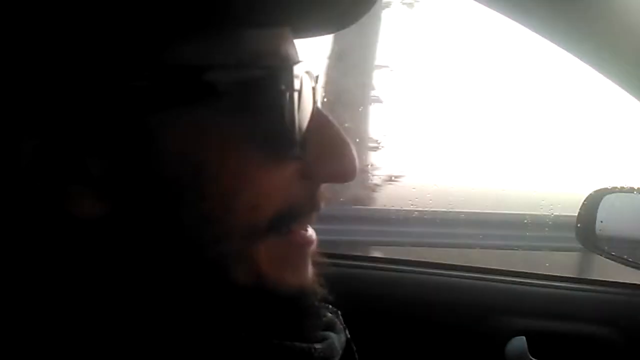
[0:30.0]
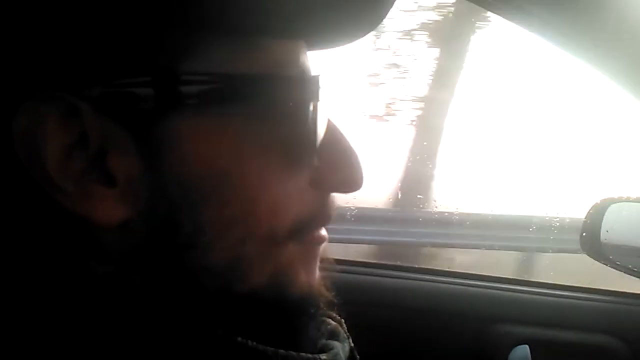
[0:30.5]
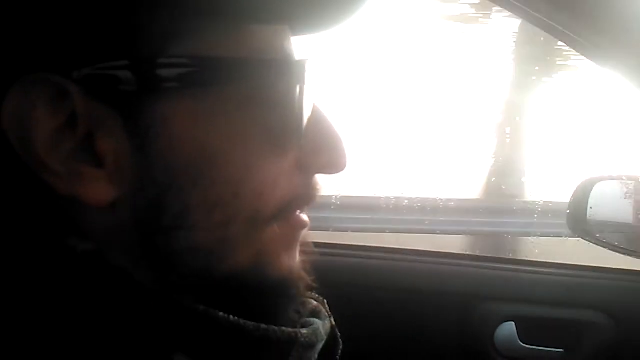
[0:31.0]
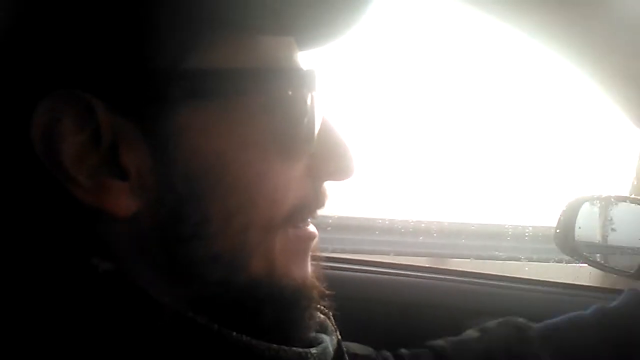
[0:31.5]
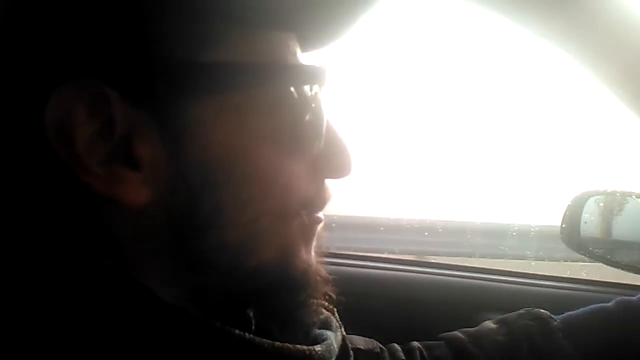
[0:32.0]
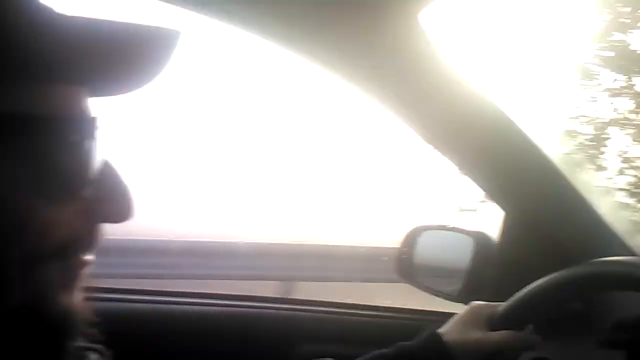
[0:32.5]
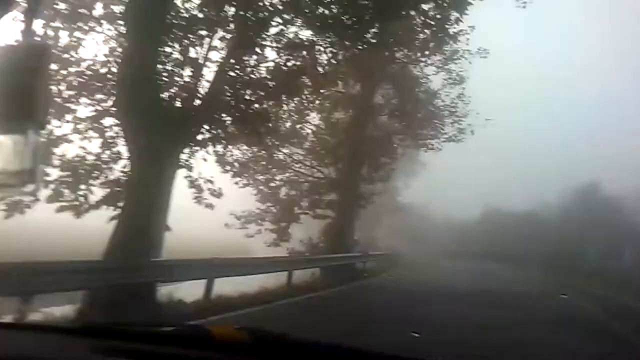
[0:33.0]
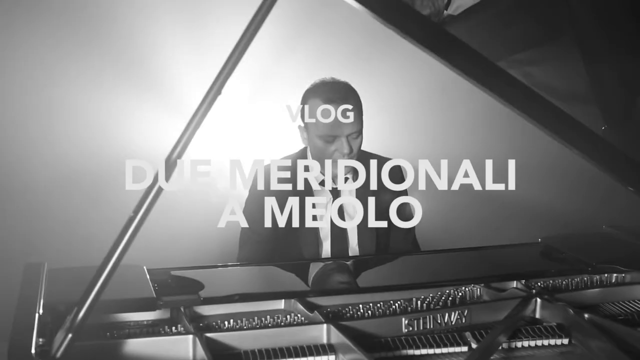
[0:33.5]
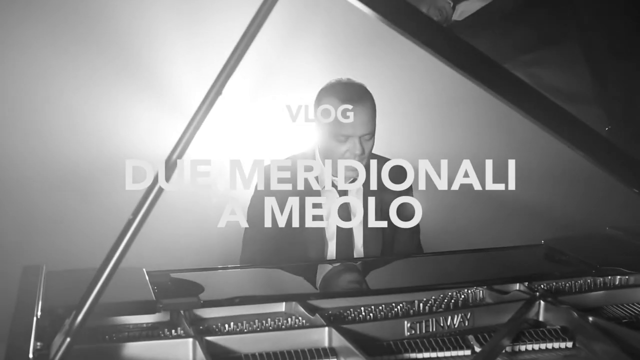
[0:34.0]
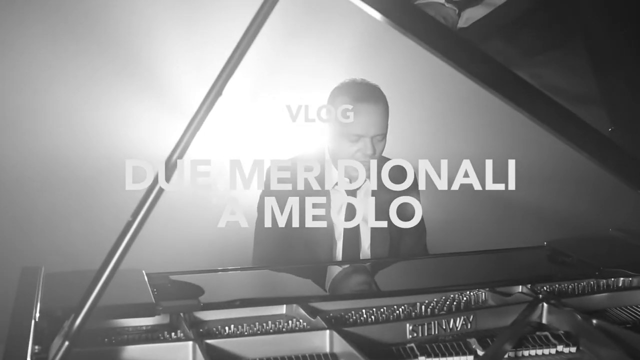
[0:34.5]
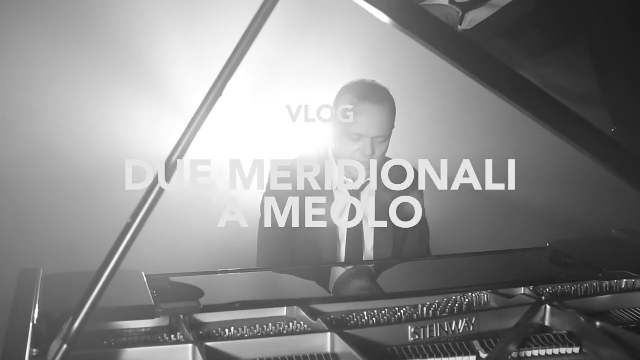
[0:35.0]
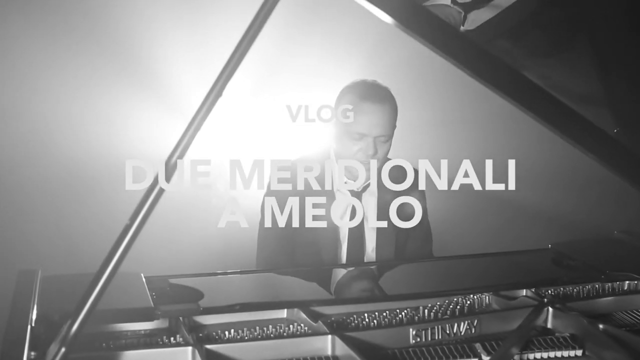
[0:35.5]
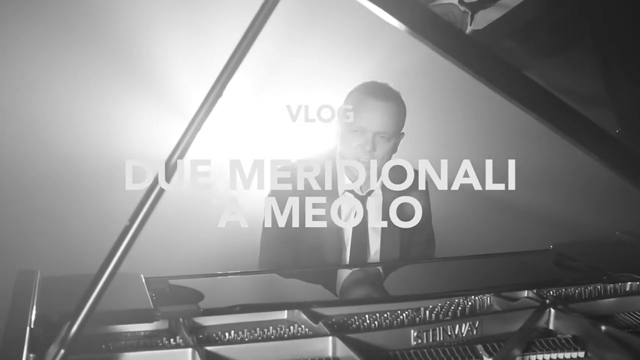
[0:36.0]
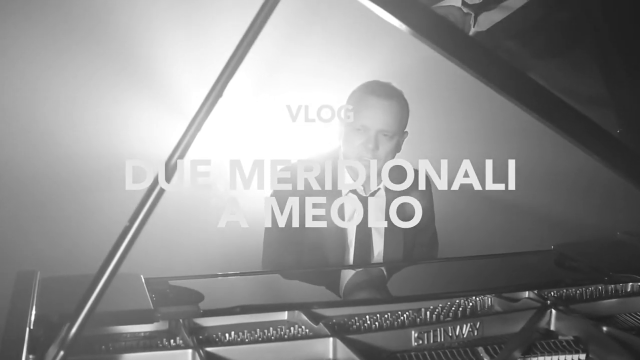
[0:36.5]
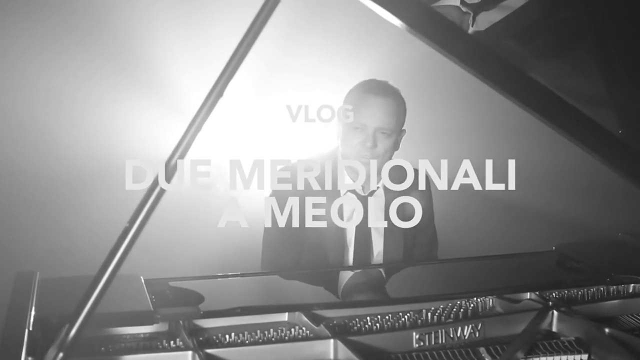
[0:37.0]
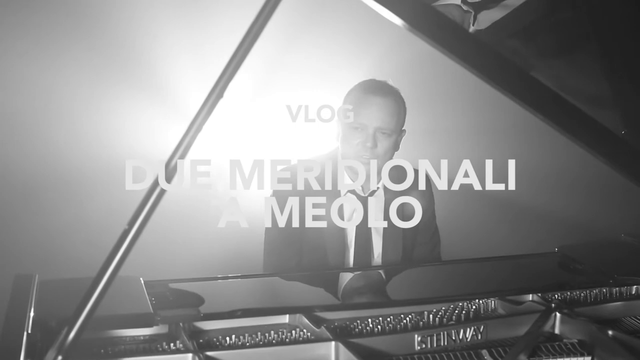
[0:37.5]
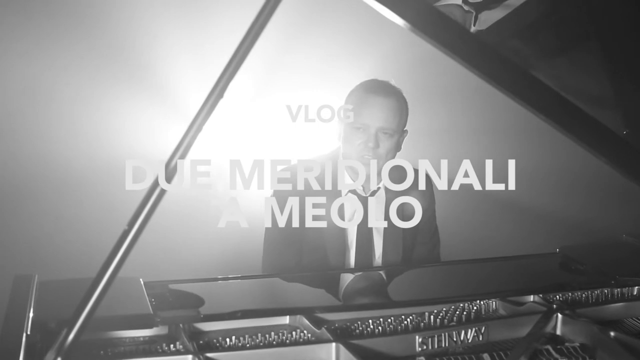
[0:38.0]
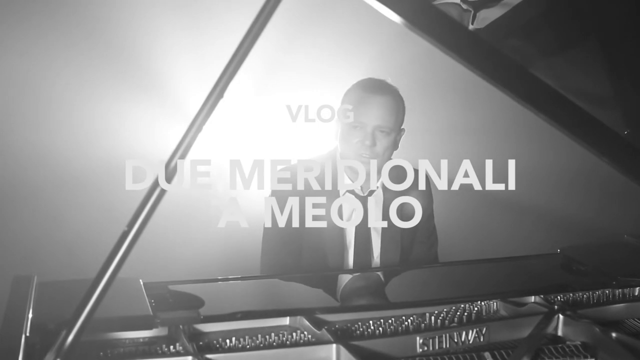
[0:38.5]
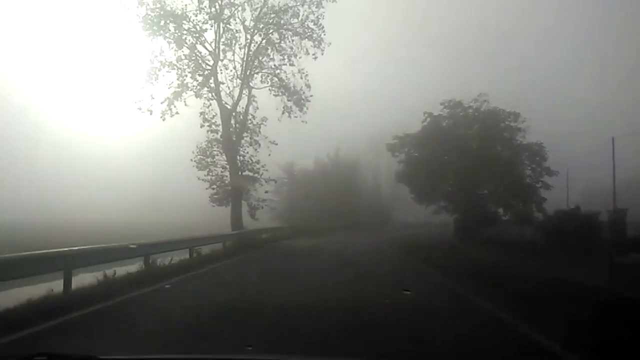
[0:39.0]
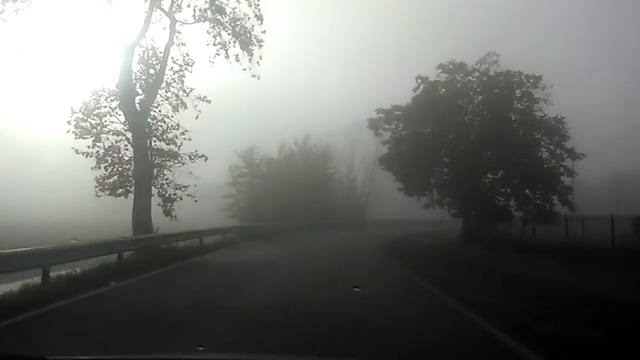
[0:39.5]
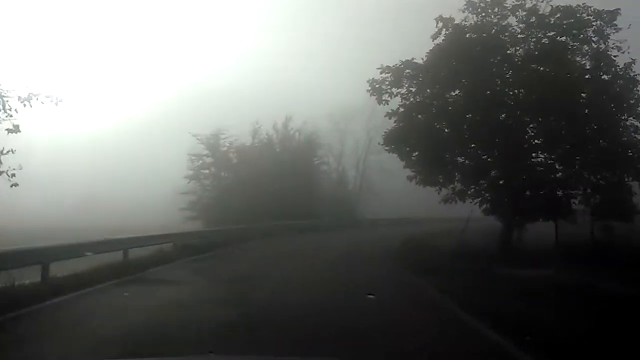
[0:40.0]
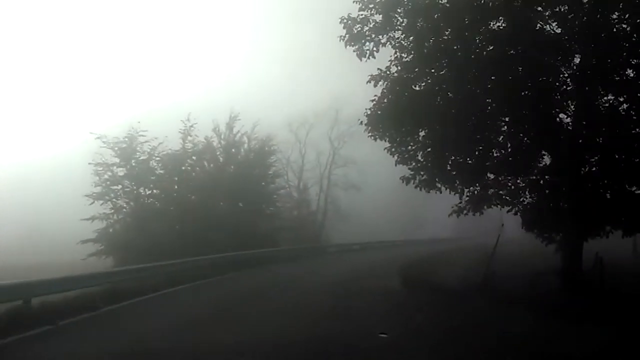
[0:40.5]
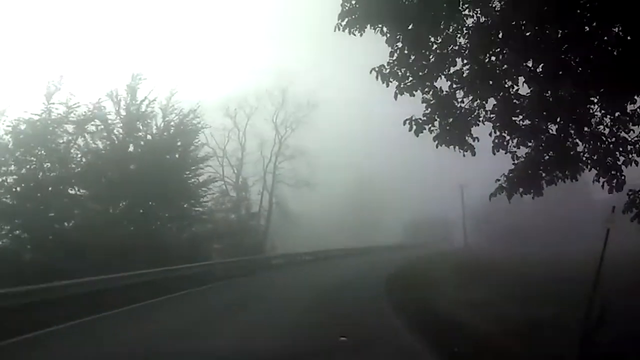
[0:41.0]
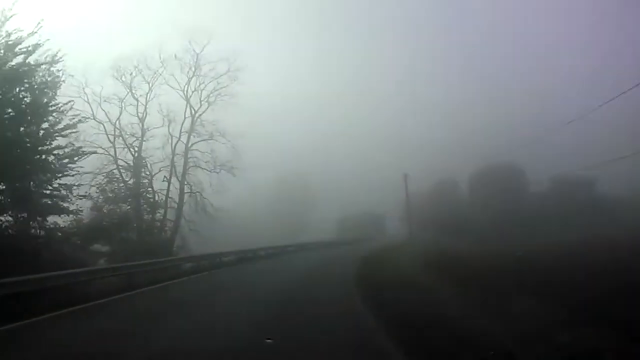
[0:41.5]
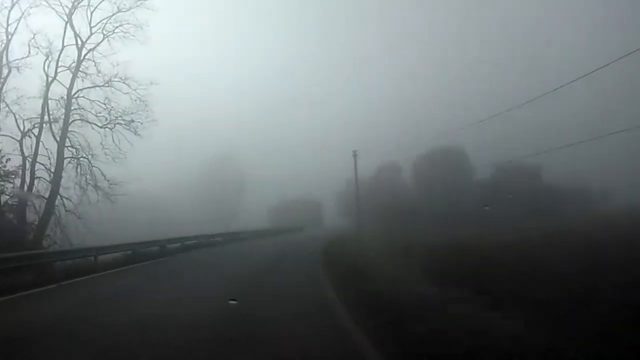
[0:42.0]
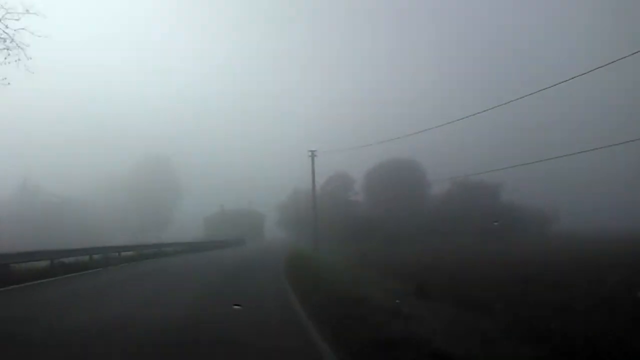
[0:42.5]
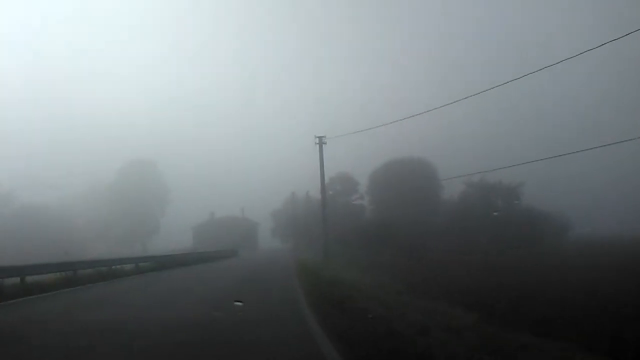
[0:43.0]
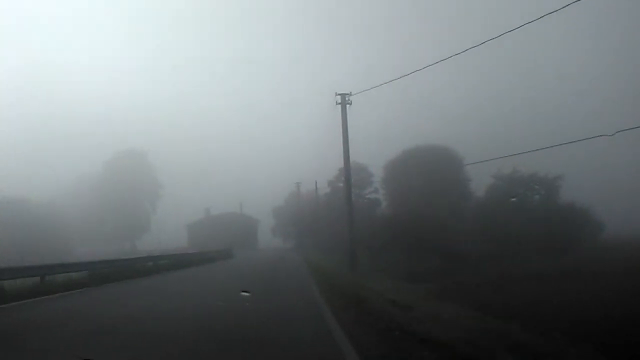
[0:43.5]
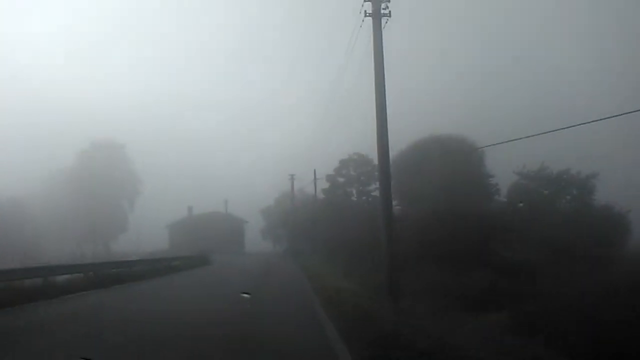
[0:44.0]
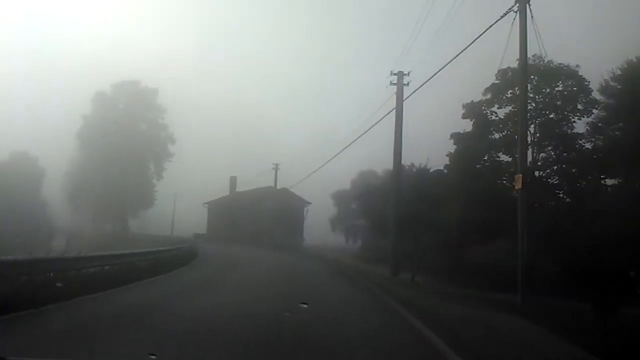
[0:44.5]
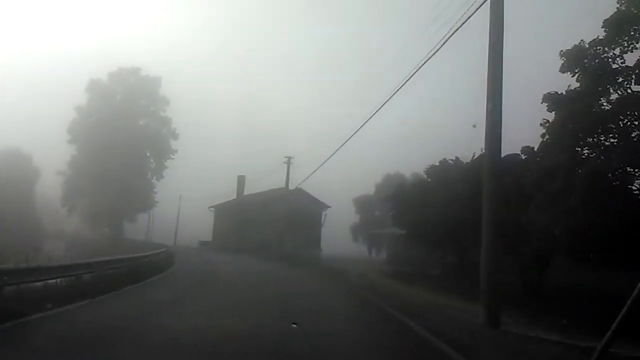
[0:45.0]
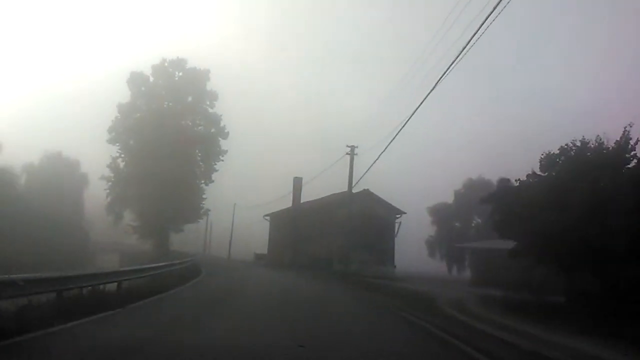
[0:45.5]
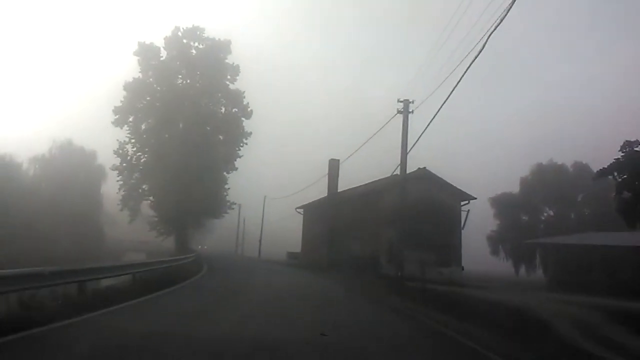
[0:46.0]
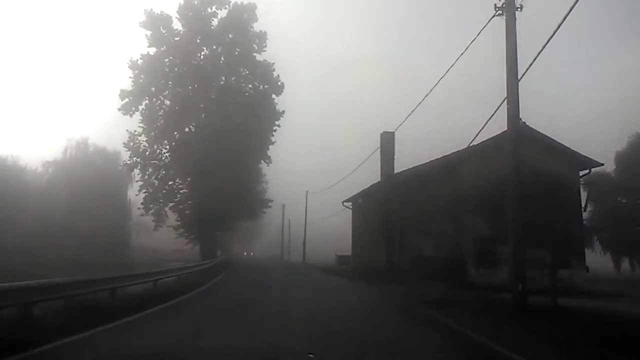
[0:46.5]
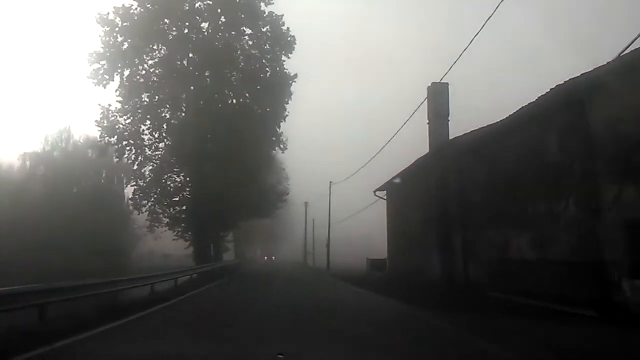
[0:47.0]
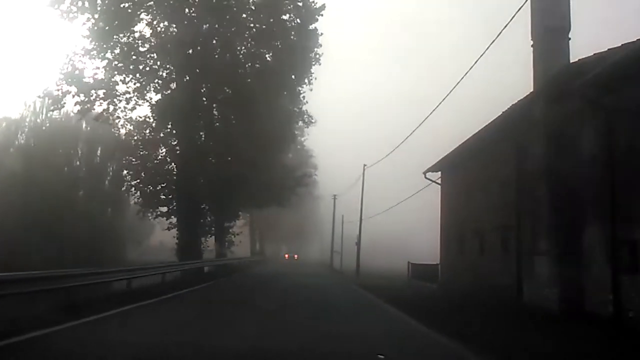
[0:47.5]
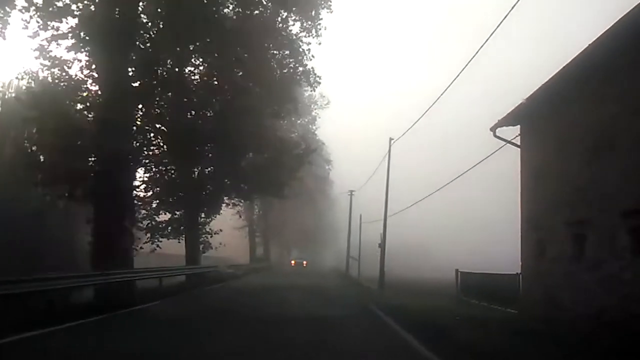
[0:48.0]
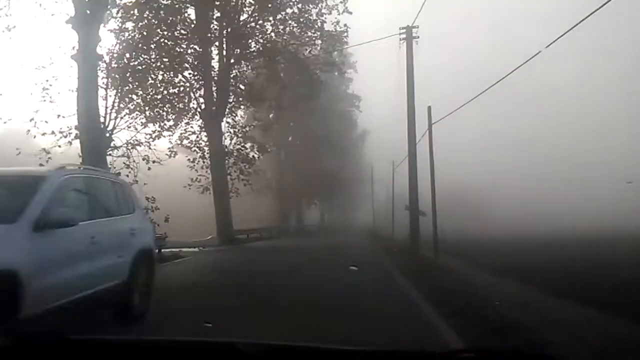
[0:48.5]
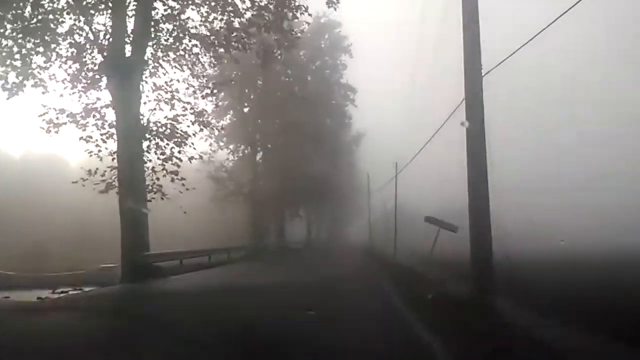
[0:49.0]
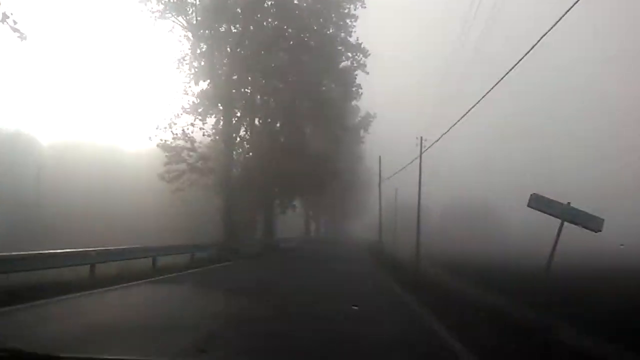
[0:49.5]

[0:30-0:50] Inside a vehicle, a smiling young man with a goatee is driving and looking straight ahead. The camera, evidently handheld, turns from him to look out through the windshield. It is a very foggy day in daylight, with a kind of blue sky with a lot of white and yellow; it has either just rained or it is very foggy. The car is probably moving about 30 to 40 miles an hour along a narrow paved road, passing a lot of trees in a very green environment. The camera switches back to the driver, then back through the windshield. The video then switches to a black-and-white video of an older man playing a piano; he appears to be singing, as he is kind of moving his head. It then switches back to the car going down a road with a bend in it. Power lines and a small house are off to the right, and another car is coming with its headlights on. They are moving fairly fast.